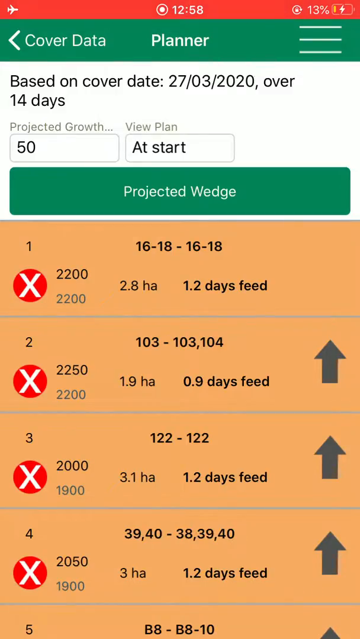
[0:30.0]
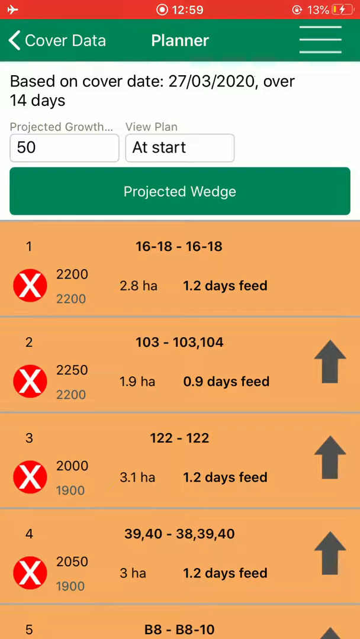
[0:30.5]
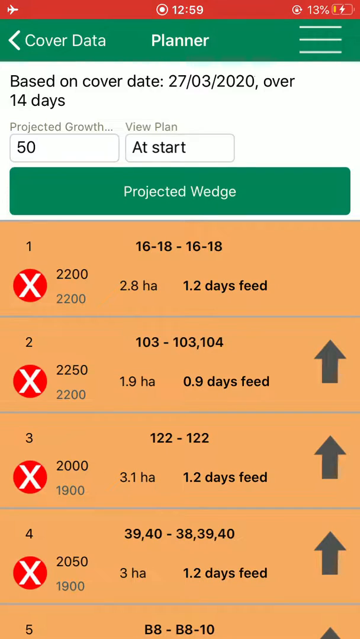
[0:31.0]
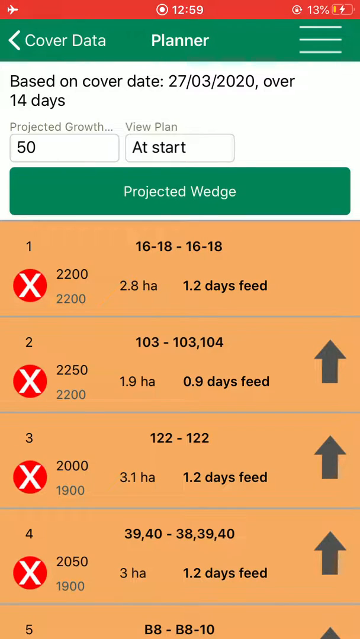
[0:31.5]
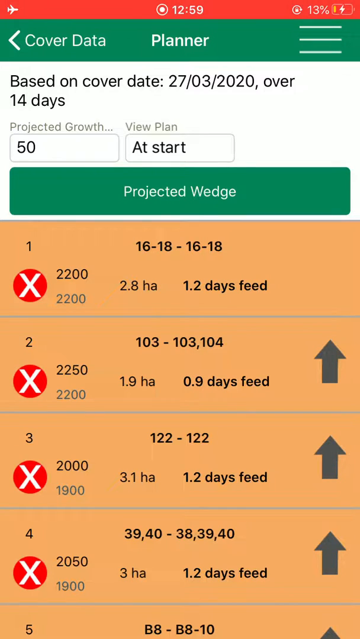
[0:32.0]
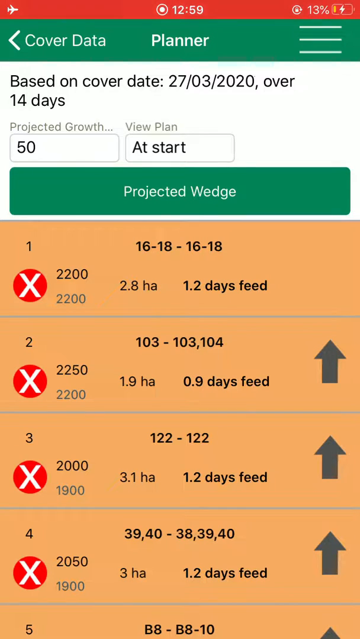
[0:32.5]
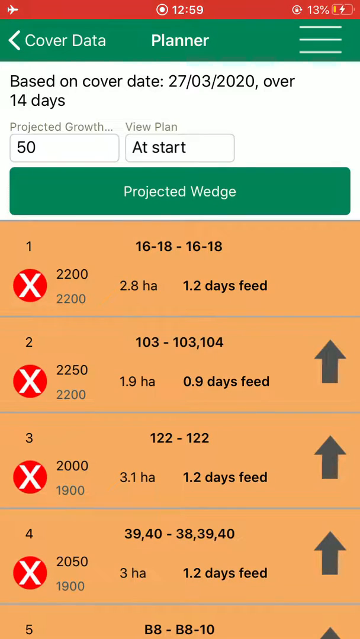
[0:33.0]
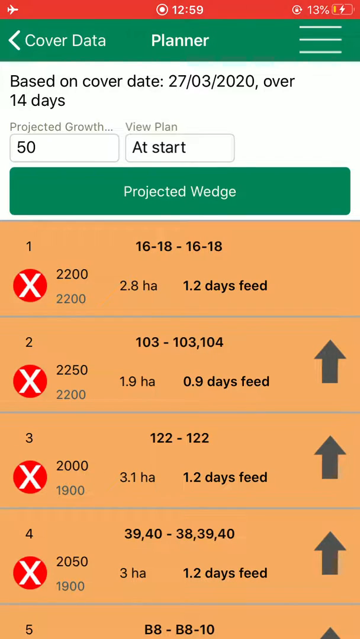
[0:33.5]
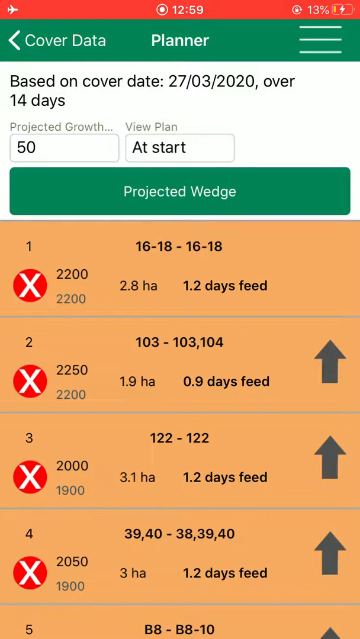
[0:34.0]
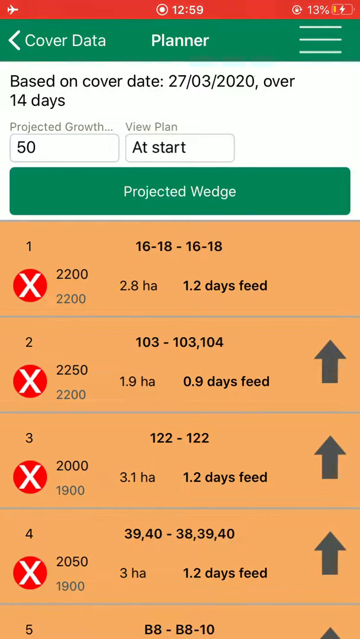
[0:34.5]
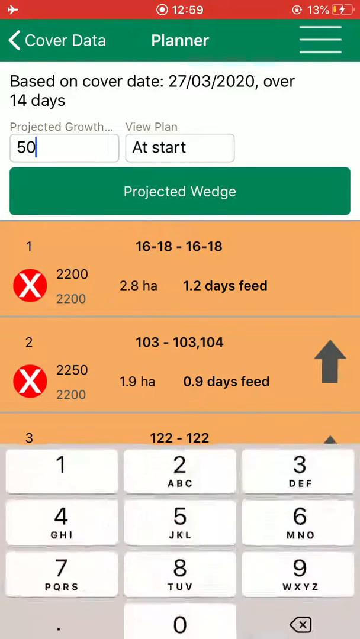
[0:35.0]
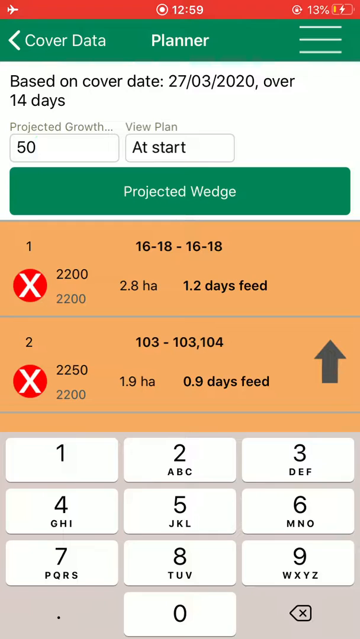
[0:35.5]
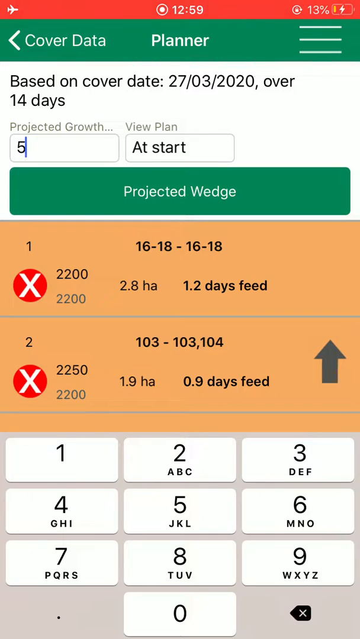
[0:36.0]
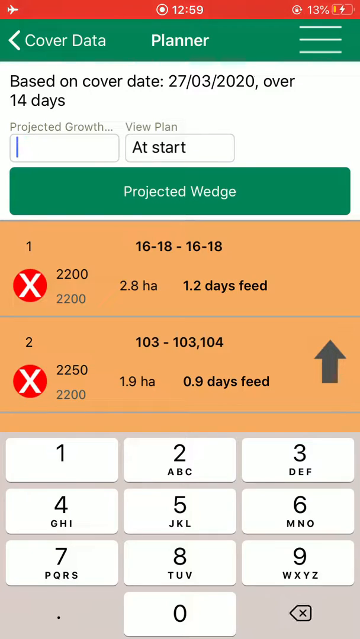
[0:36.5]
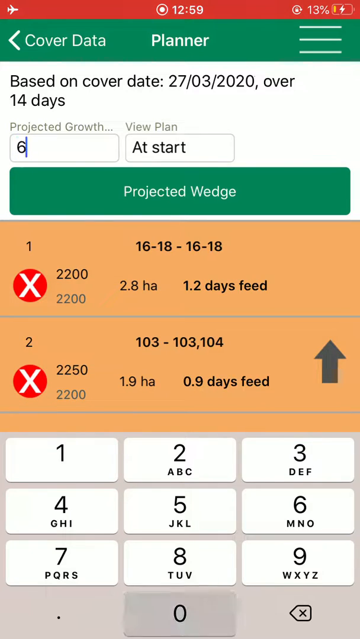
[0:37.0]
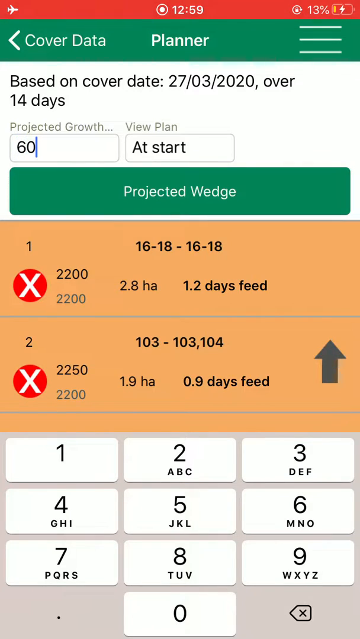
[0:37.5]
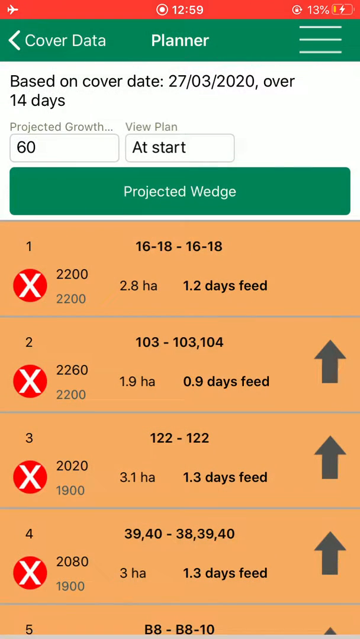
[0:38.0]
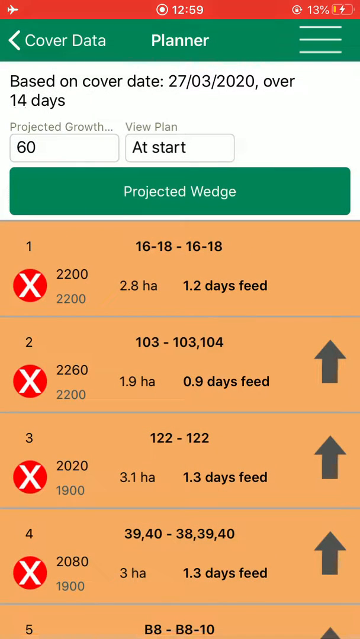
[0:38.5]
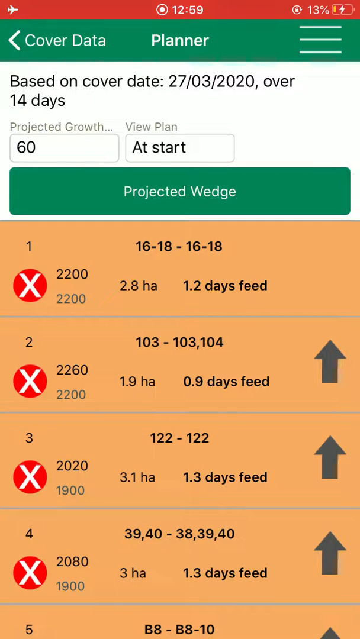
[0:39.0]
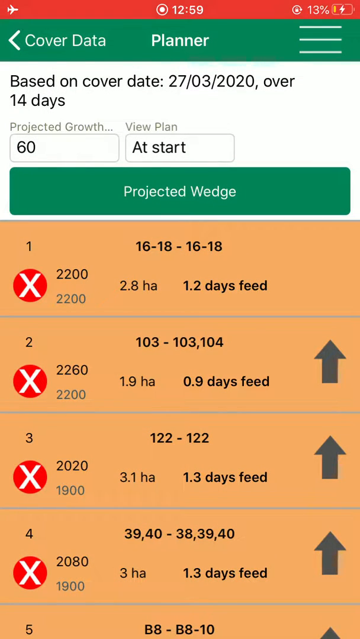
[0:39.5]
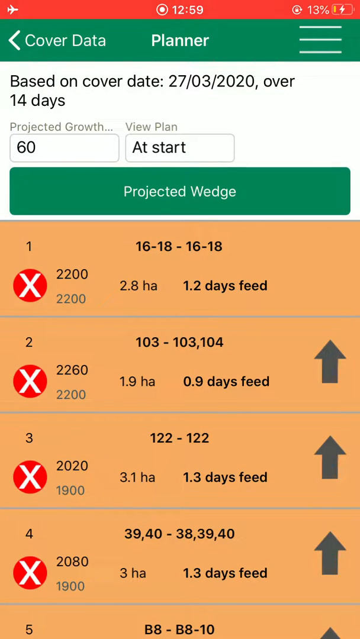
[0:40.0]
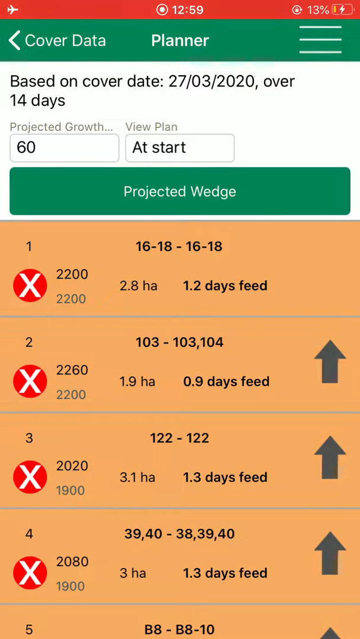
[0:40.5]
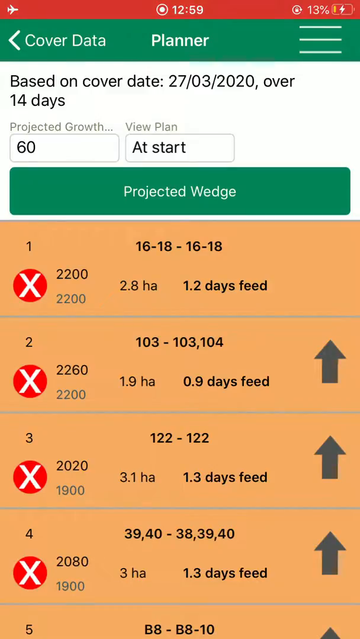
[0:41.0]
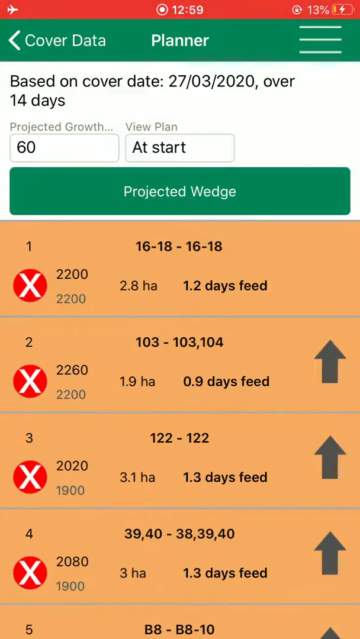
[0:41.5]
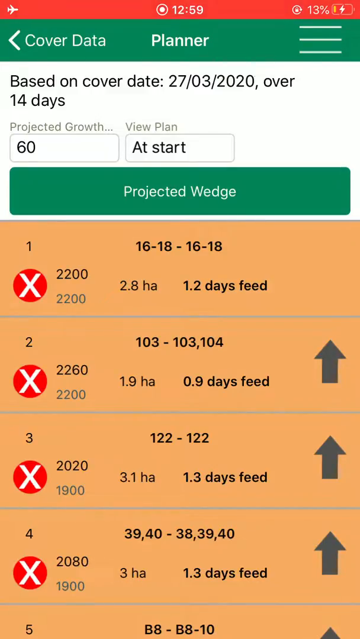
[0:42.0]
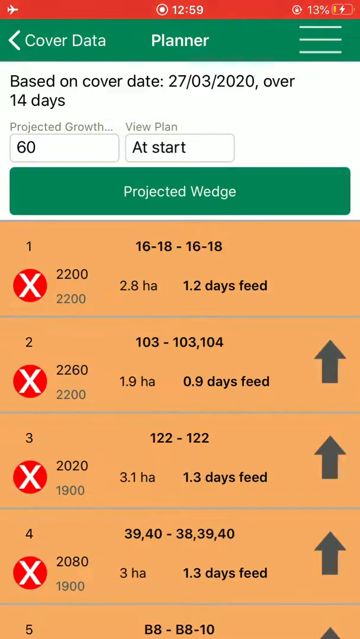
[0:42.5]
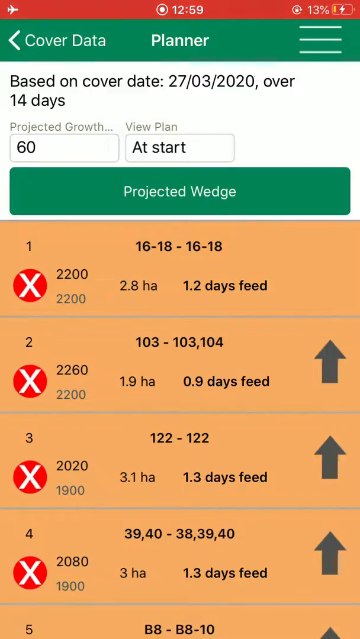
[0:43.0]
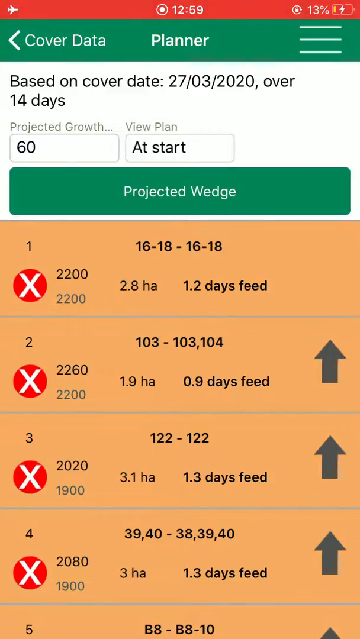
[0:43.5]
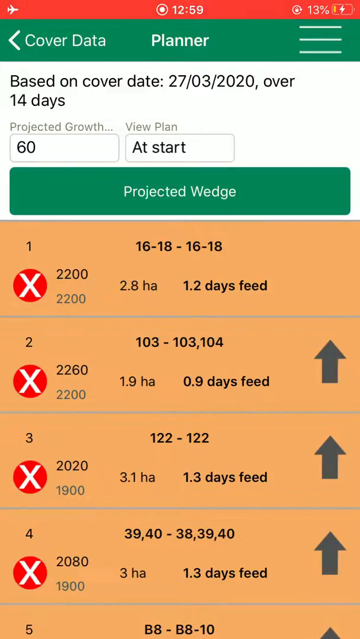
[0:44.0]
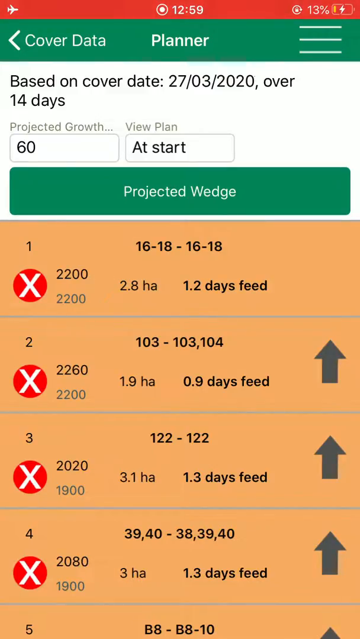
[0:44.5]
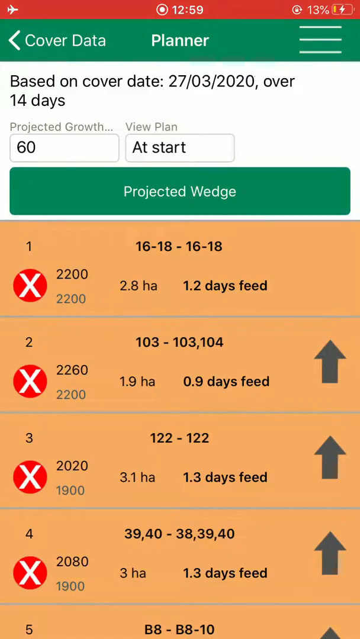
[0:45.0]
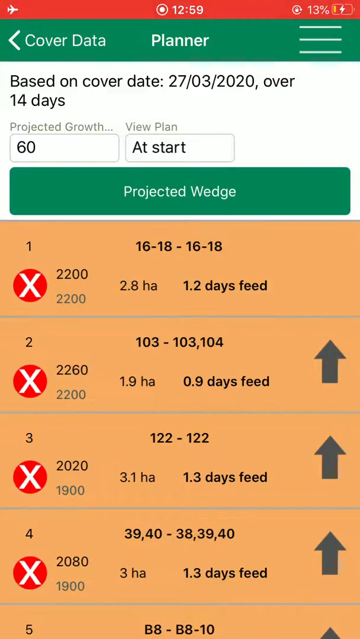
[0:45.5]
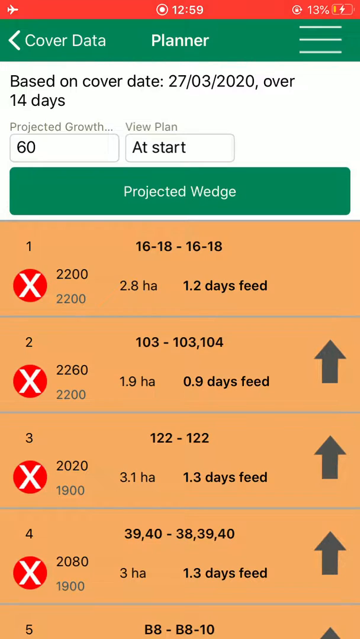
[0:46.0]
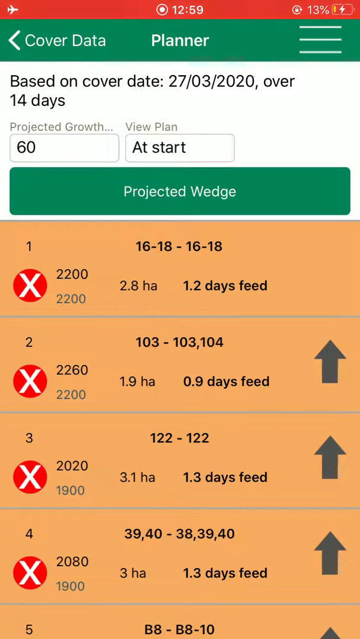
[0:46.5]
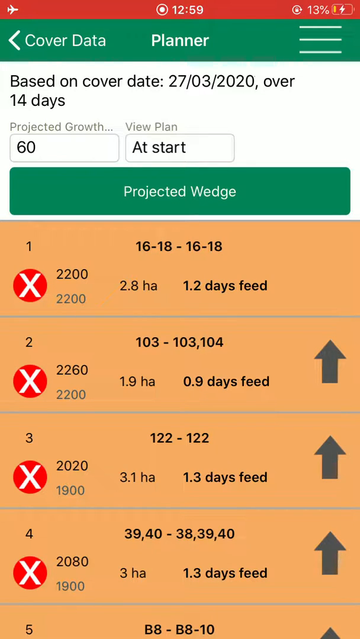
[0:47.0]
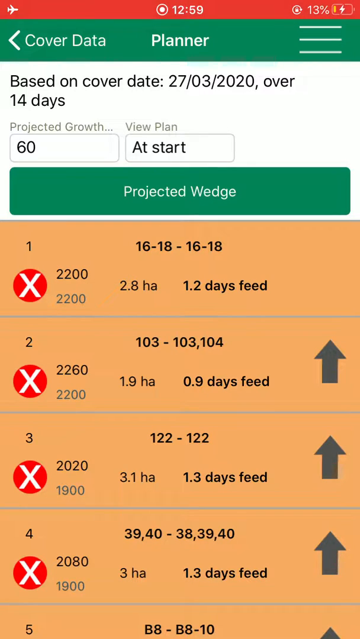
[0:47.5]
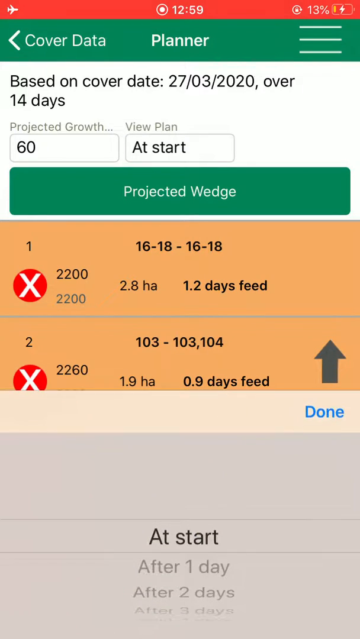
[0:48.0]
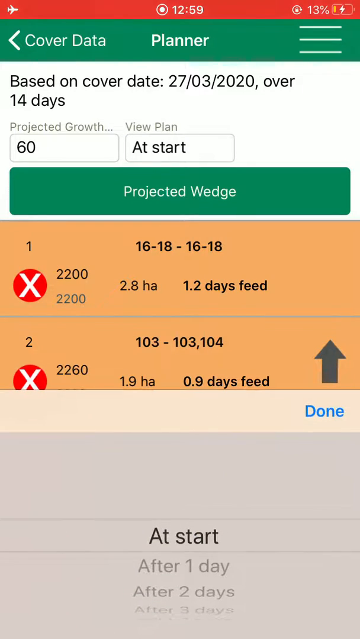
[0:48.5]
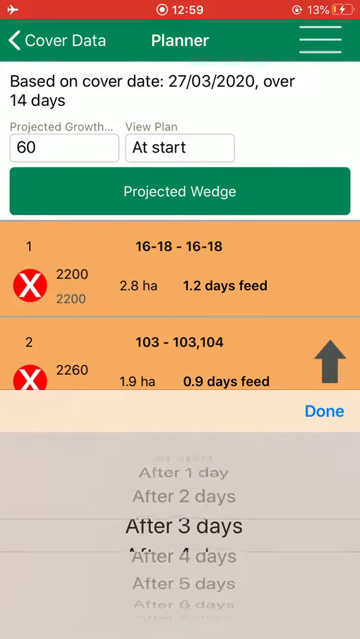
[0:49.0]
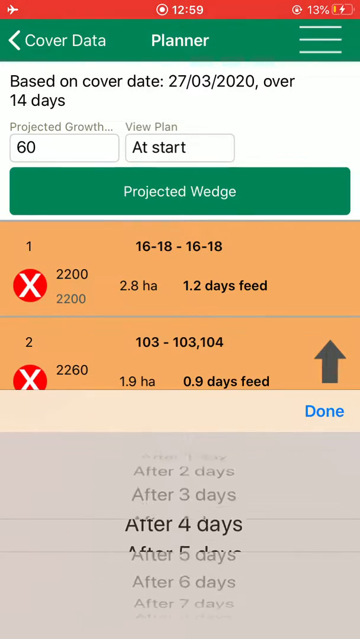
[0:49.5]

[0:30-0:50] The mobile screen still has a red bar at the top, and the time now reads 12:59. Below it is a green rectangle with "cover data" in the left corner and "planner" in the middle. In the white area below, the text reads "based on cover date, 27th of March, 2020, over 14 days". Beneath that are two windows: one has "projected growth" above it and the number 60 inside, and the other has "view plan" above it and the words "at start" inside. Below these is another green rectangle that says "projected wedge". Under it is an orange part of the screen made up of four orange rectangles placed one on top of the other, each with numbers: the first says "1.2 days feed, 2.8 hectares", the second "0.9 days feed" with "1.9 hectares", the third "1.3 days feed, 3.1 hectares", and the last "1.3 days feed" with "3 hectares".